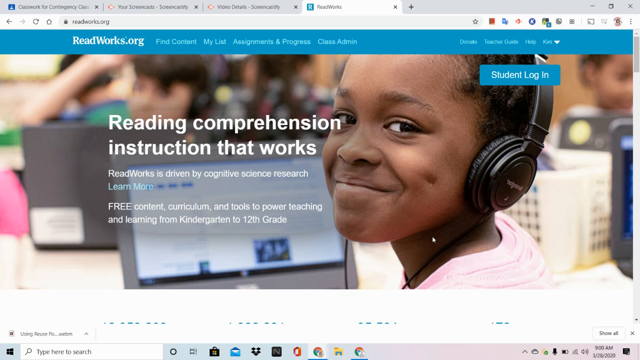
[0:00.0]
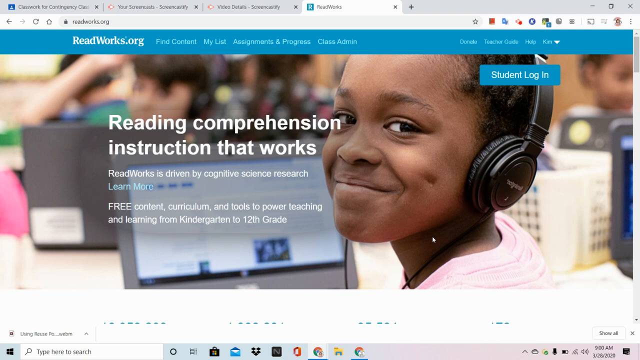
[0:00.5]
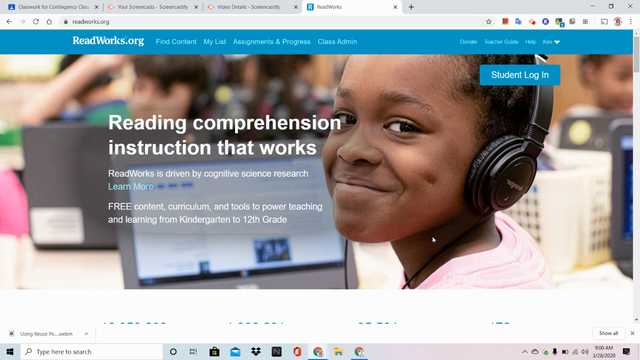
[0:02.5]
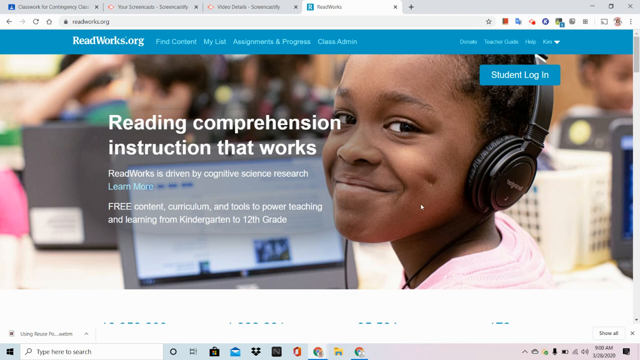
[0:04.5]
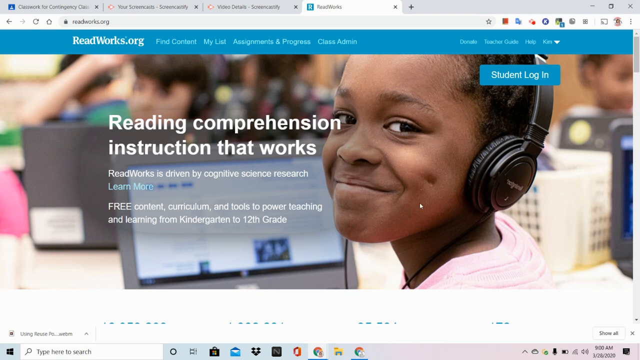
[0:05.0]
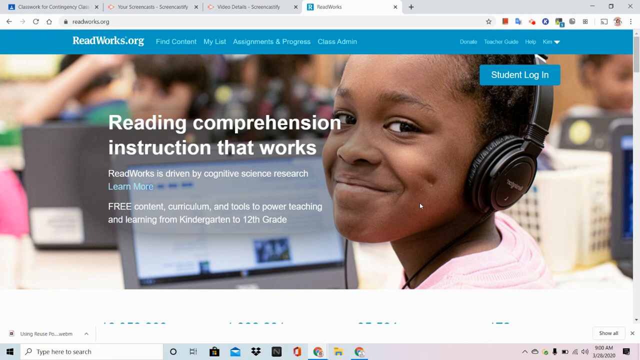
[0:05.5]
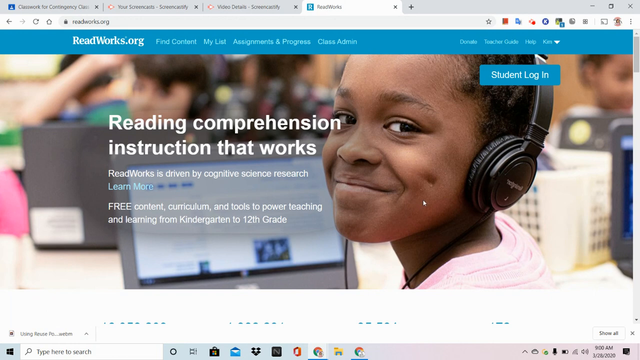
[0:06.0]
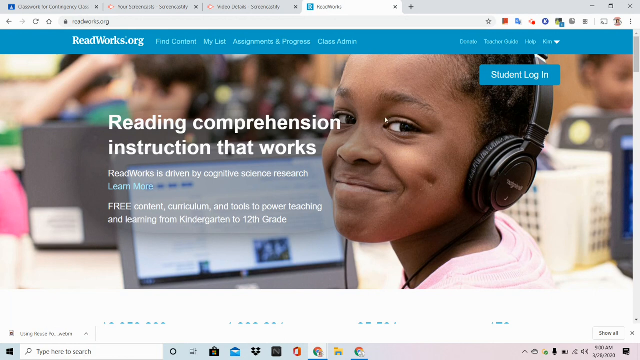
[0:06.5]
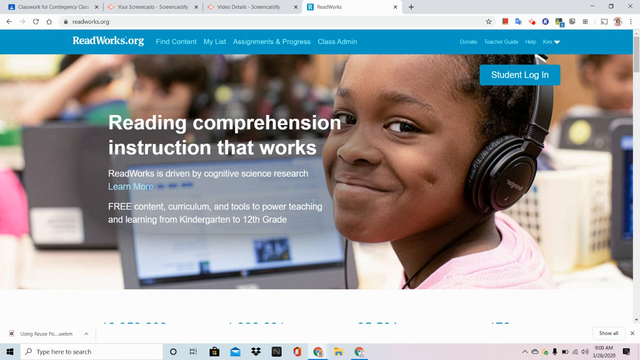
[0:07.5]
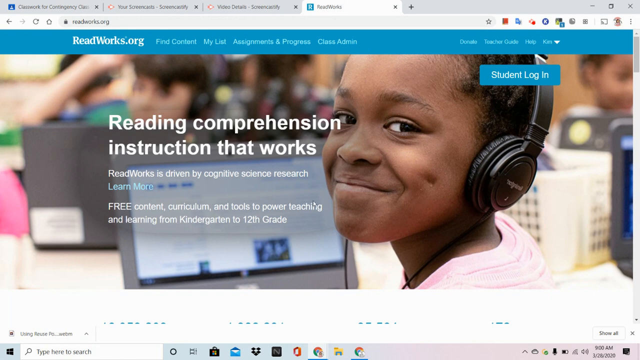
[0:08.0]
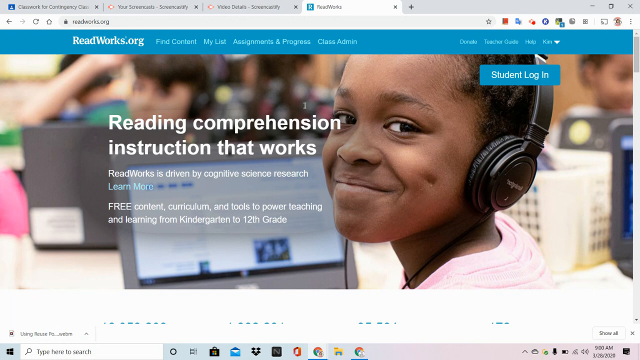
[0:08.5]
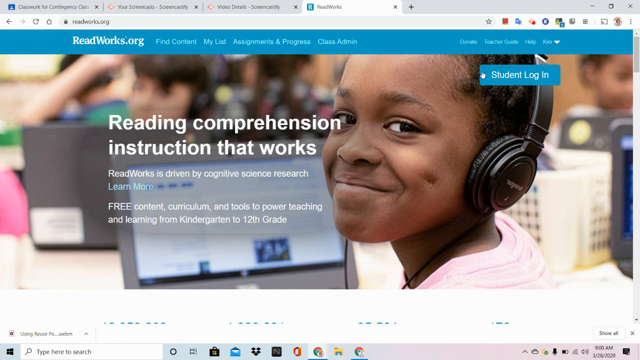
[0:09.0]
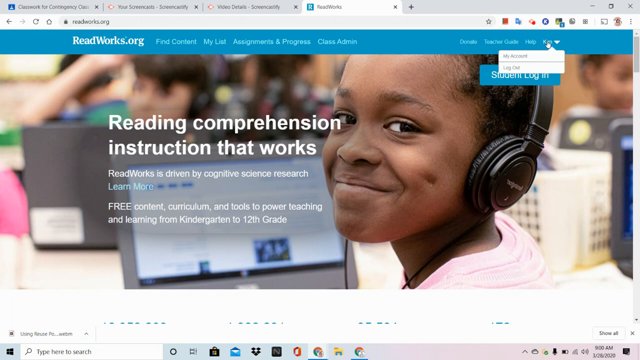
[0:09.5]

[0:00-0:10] The video opens on a website called ReadWorks.org. The site has a blue top bar with text written in red, and under that top bar there is a smaller button reading "student login". Text written in white reads "Reading comprehension instruction that works. ReadWorks is driven by cognitive science research", followed by a "learn more" button. Below that is written "free content curriculum and tools to power teaching and learning from kindergarten to the 12th grade".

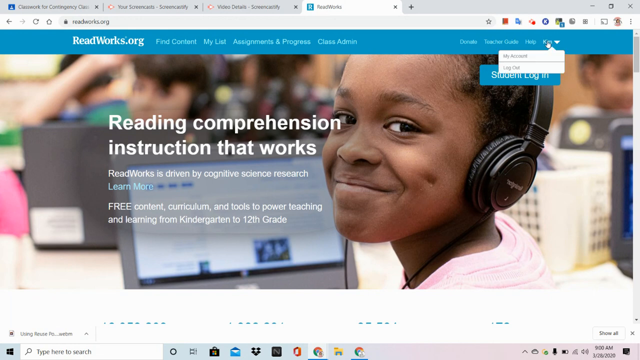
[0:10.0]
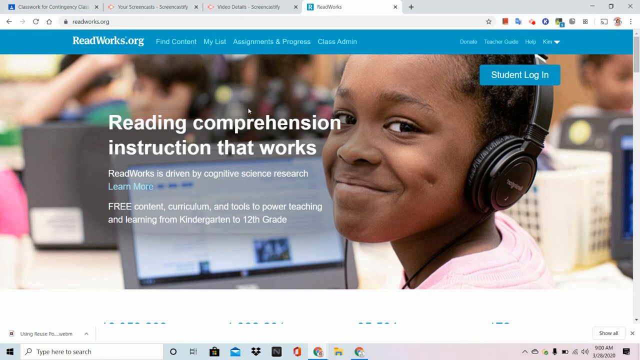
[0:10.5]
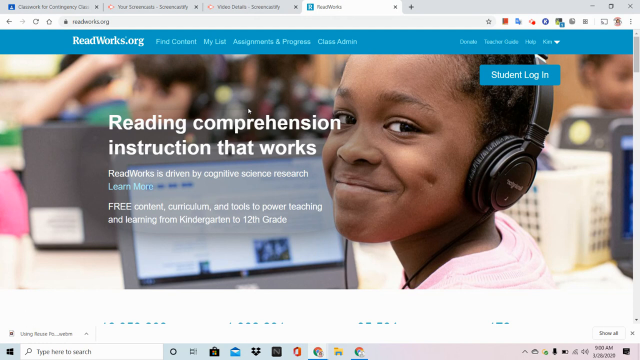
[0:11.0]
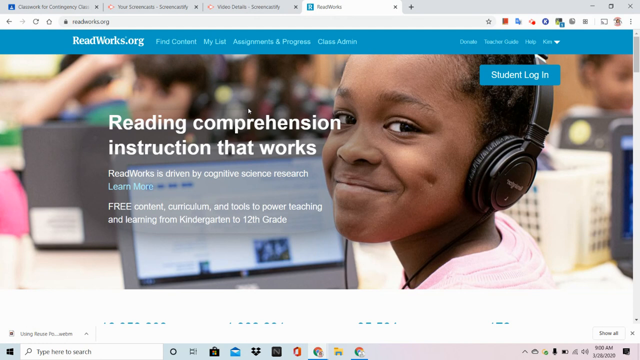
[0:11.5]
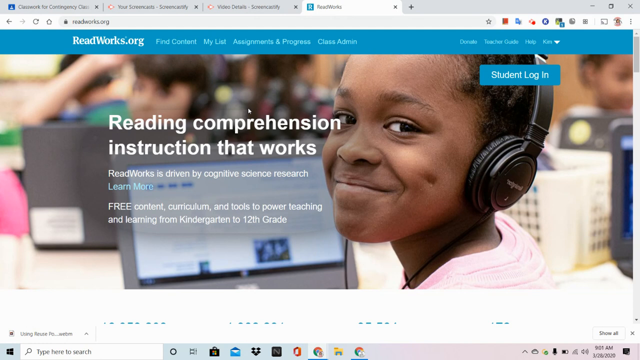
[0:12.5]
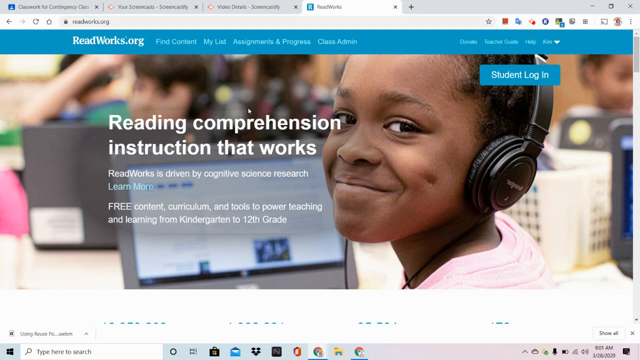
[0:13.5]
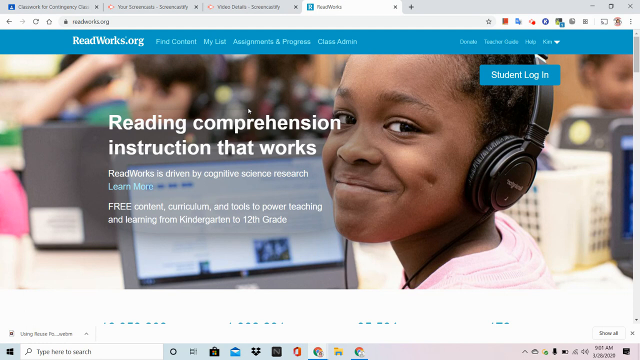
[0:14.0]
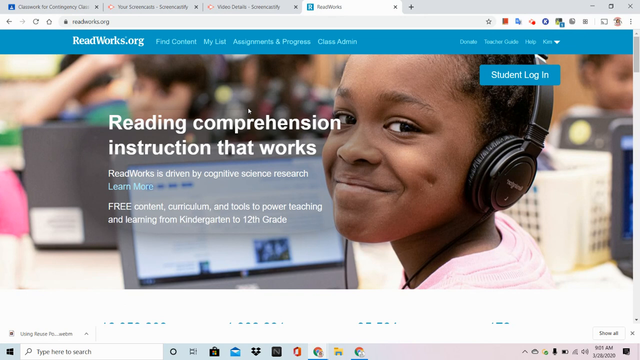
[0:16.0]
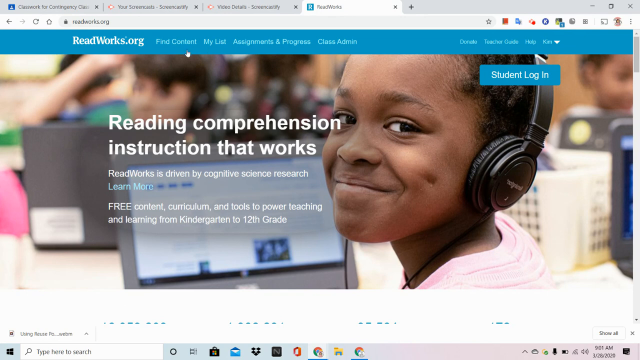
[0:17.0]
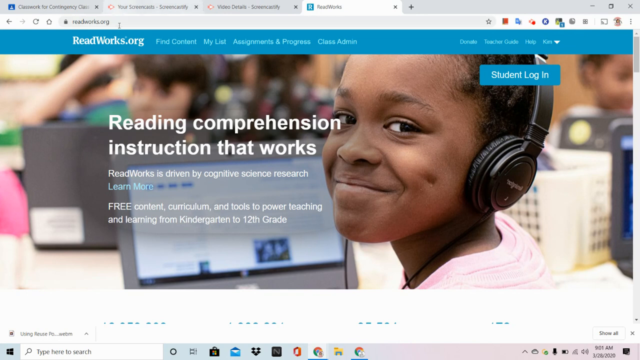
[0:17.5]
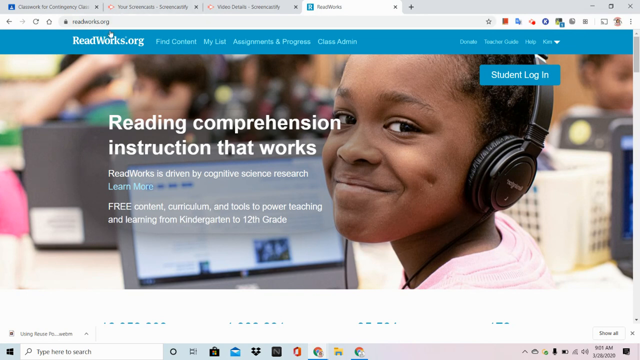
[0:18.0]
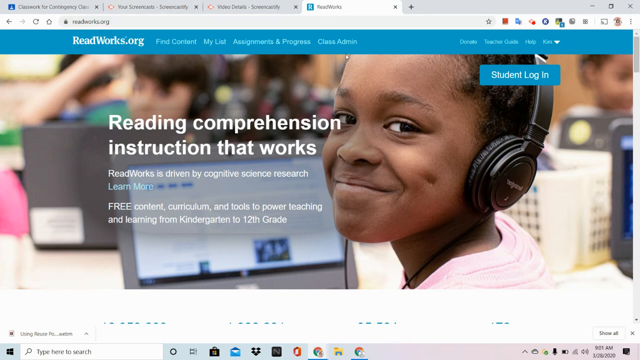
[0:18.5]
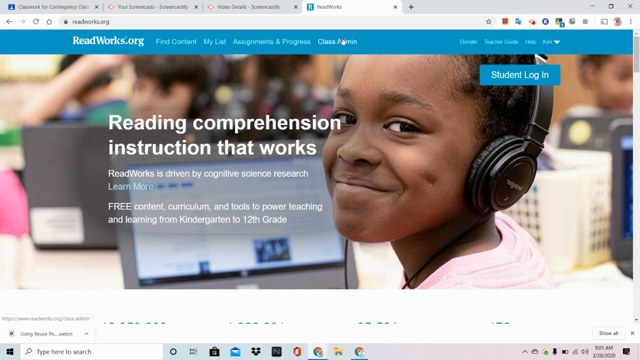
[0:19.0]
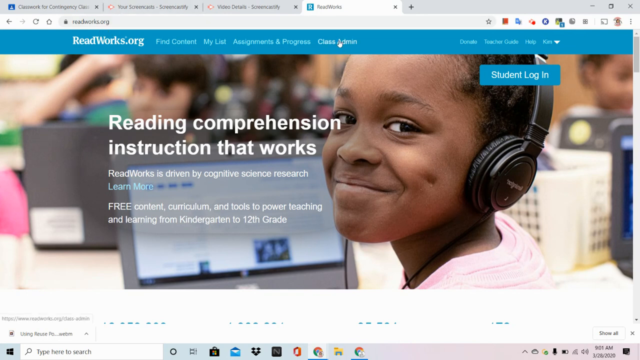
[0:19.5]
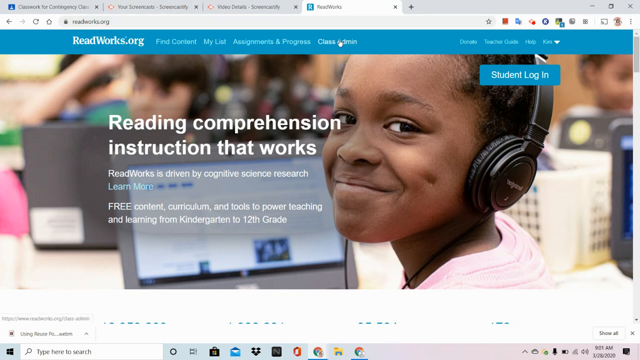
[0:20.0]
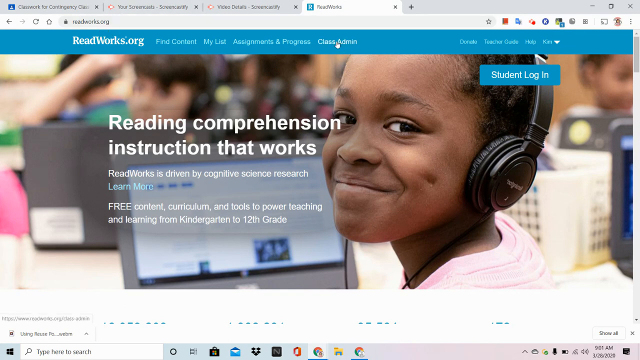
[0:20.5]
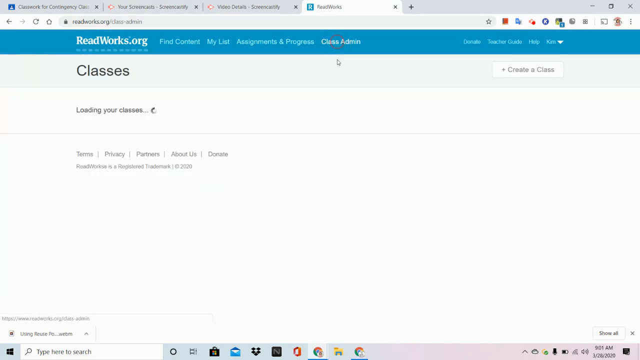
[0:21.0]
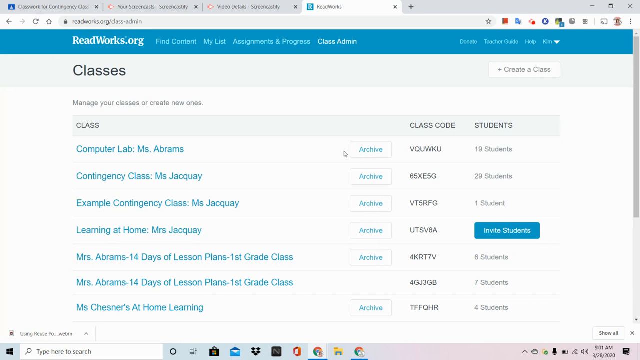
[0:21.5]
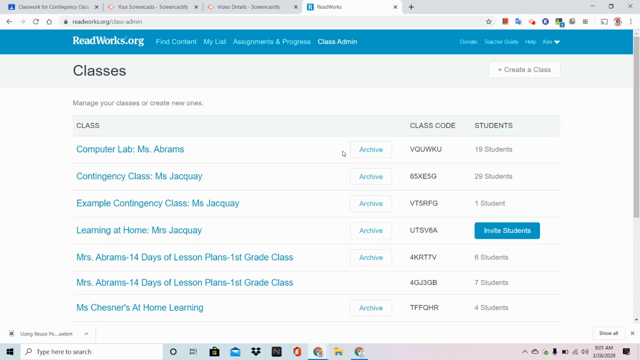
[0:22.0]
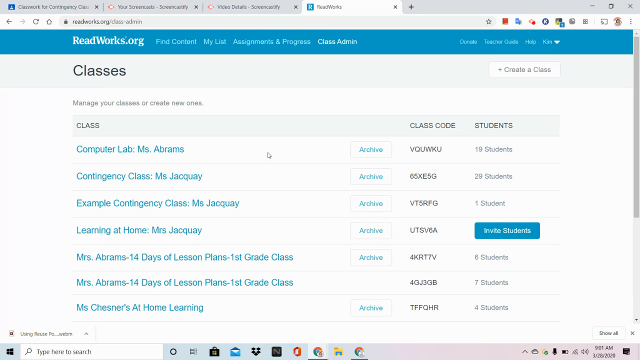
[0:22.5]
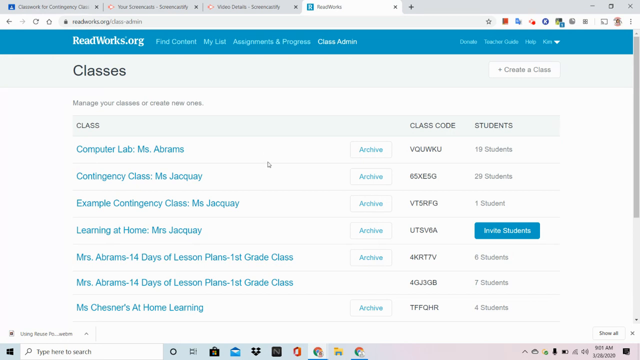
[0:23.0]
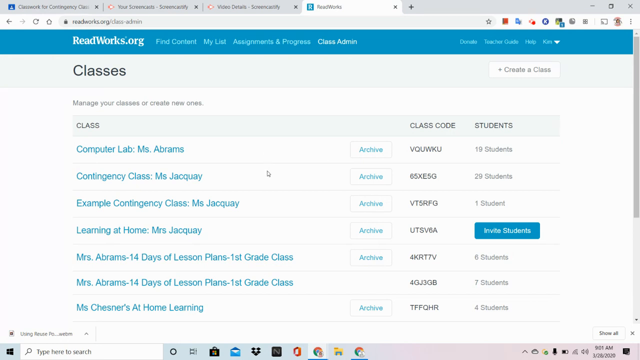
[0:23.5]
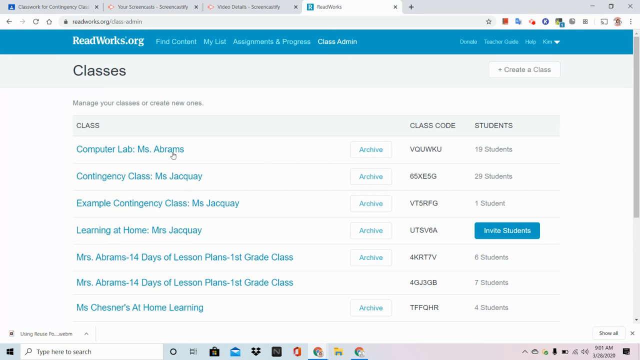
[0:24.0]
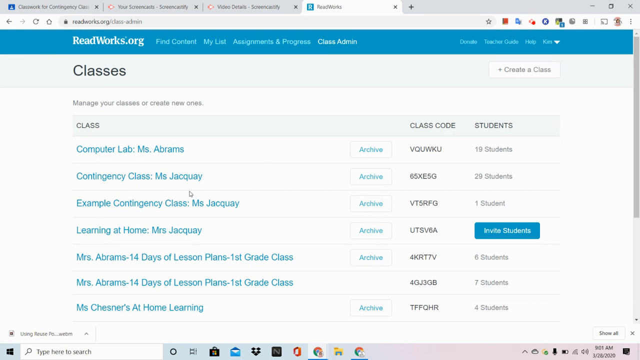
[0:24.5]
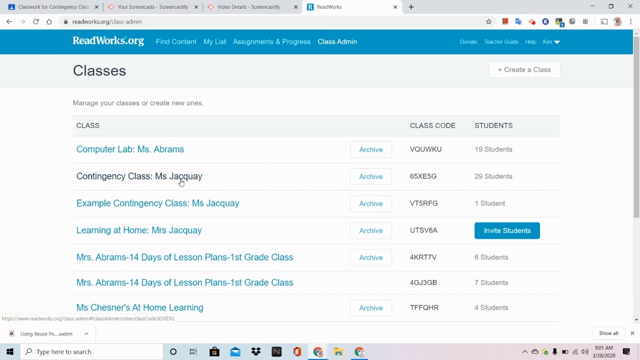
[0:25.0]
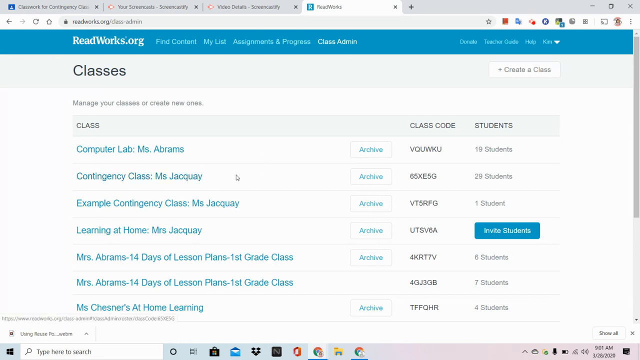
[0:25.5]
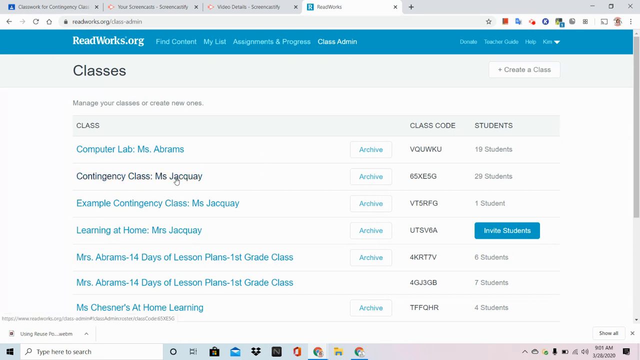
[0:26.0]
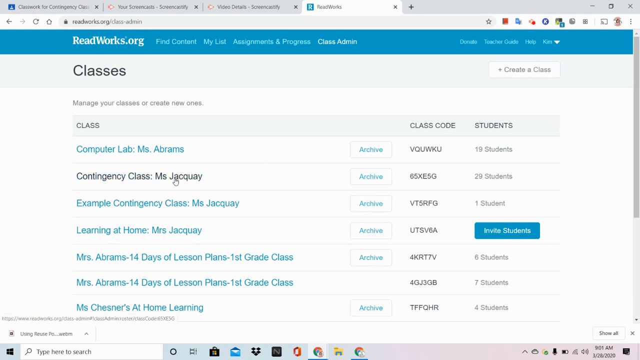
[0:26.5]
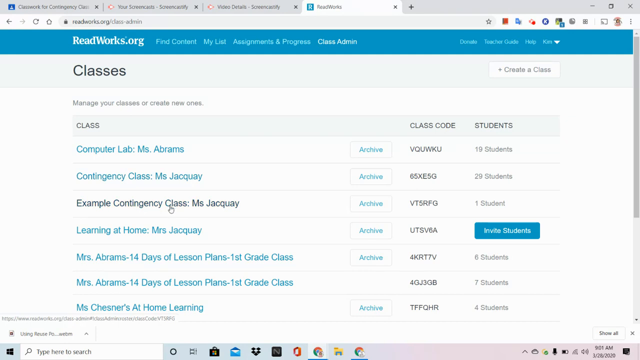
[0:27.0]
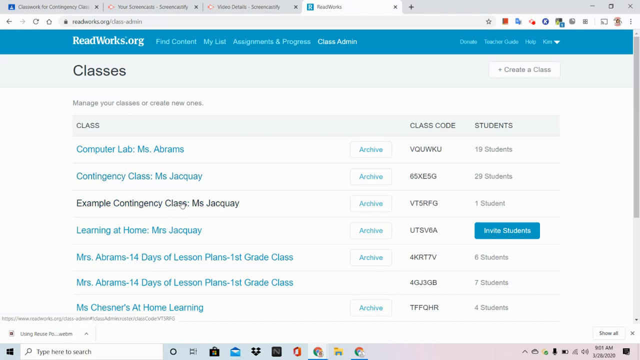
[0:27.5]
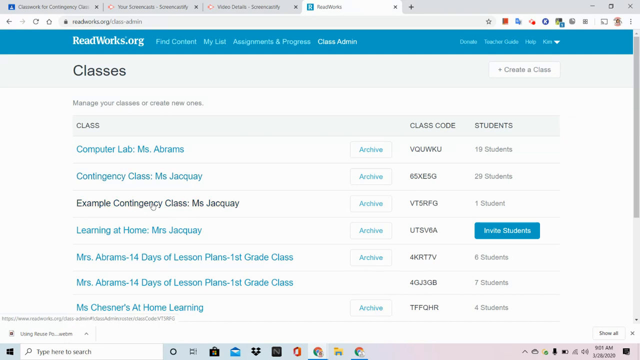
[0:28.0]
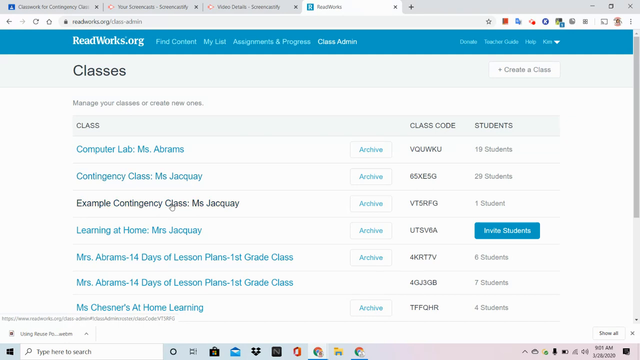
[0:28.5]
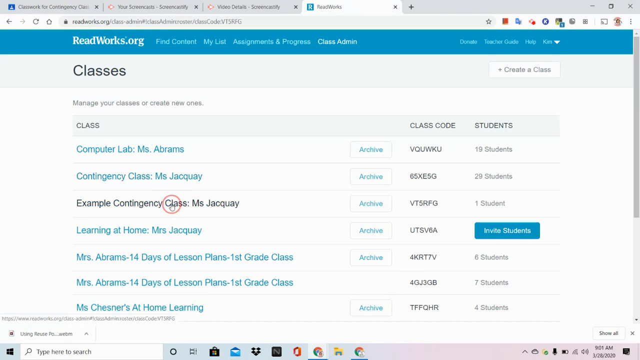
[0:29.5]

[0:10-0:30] In the background is a young girl with headphones on her ears, with a laptop behind her and a blurred effect on her table. The pointer clicks on the words "class admin" on the top bar, and a screen showing the classes appears. The pointer hovers over the contingency class by Ms Jacquay, then clicks on the "Example contingency class" by Ms Jacquay. This leads to another page, a roster for different teachers; other teachers listed in the same section, Mrs Abrams and Ms Chesner, also have lessons on the website.